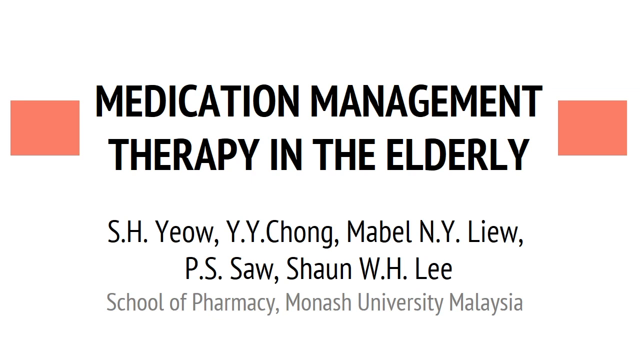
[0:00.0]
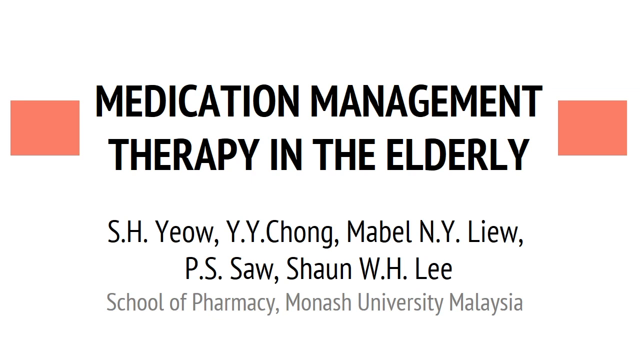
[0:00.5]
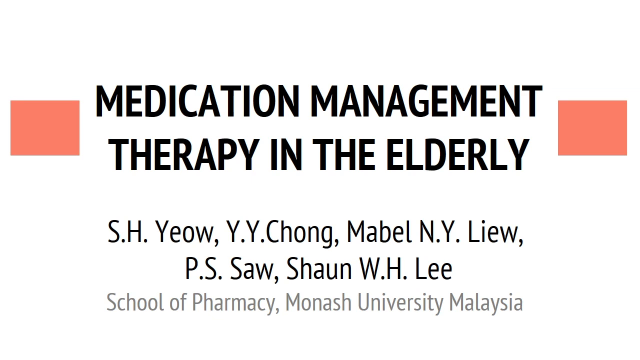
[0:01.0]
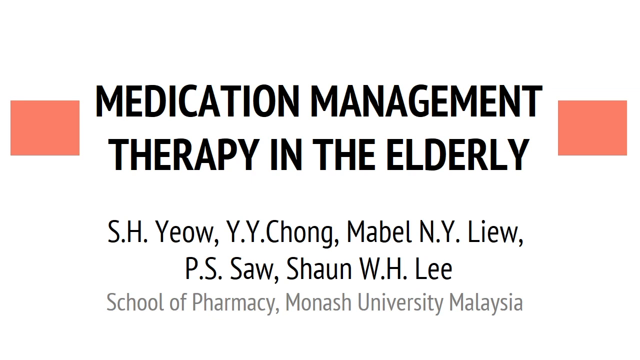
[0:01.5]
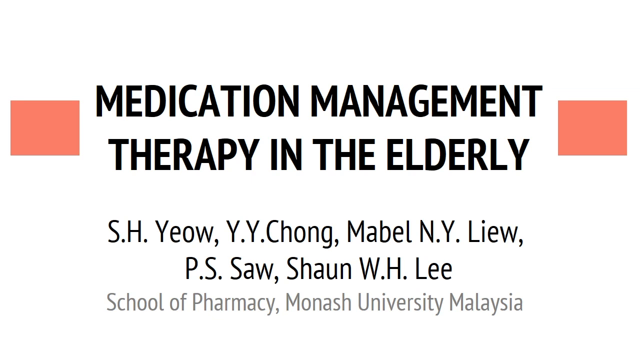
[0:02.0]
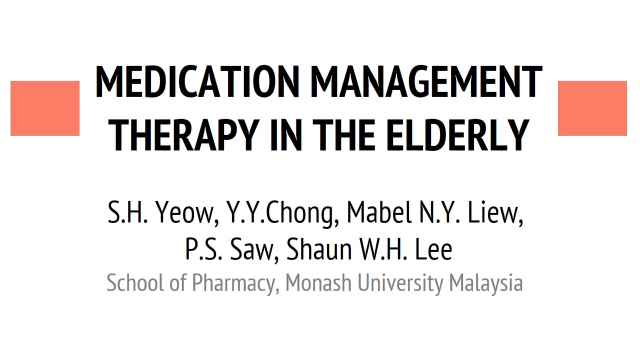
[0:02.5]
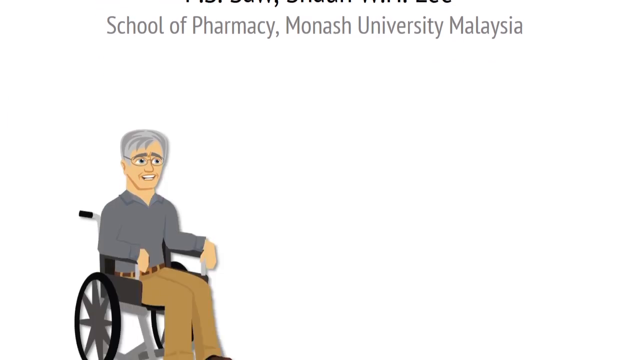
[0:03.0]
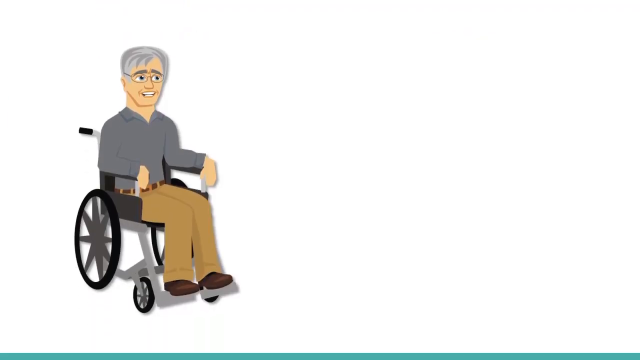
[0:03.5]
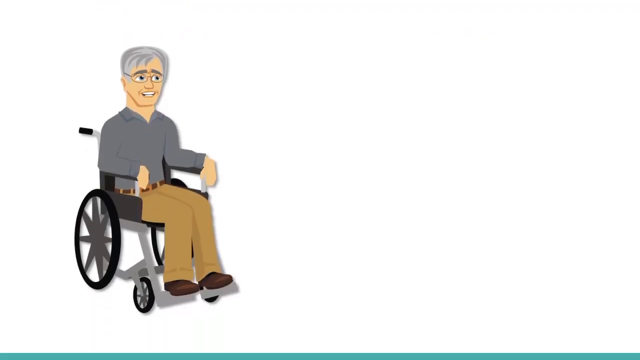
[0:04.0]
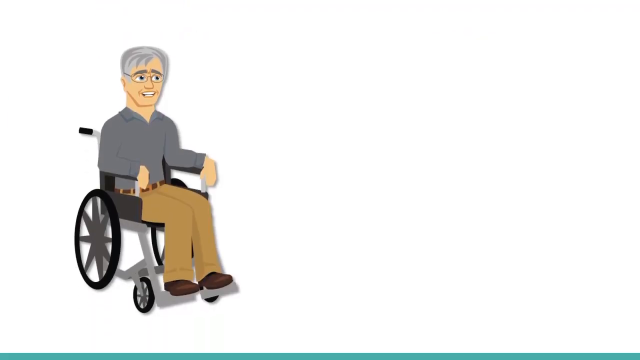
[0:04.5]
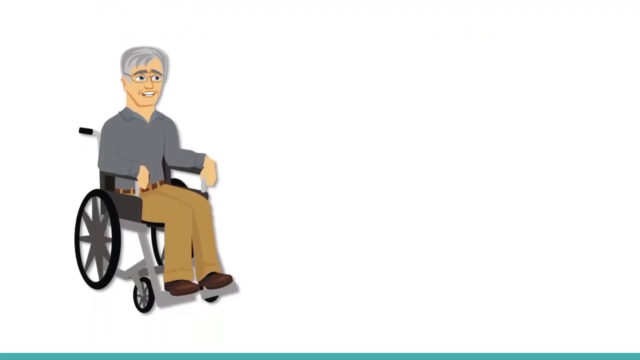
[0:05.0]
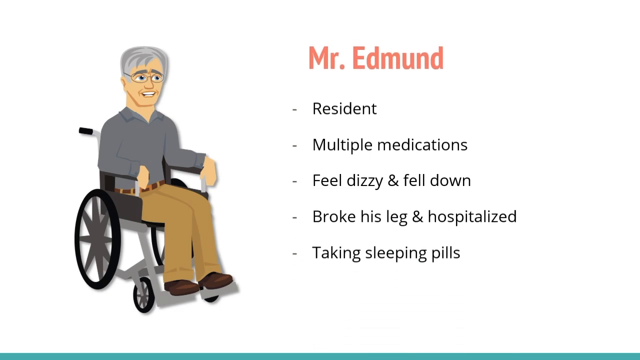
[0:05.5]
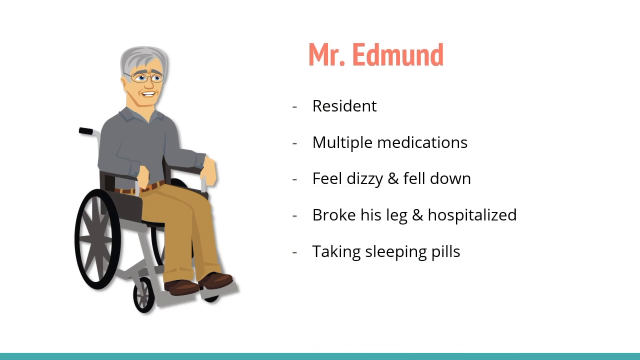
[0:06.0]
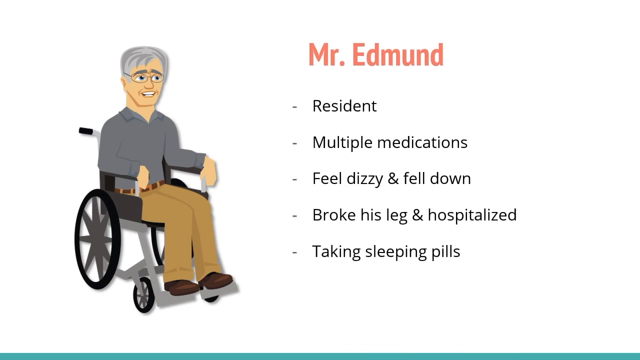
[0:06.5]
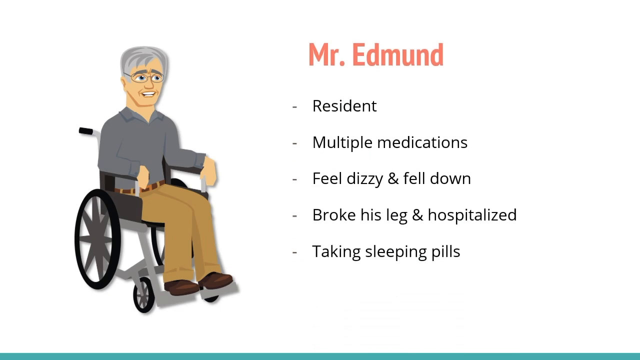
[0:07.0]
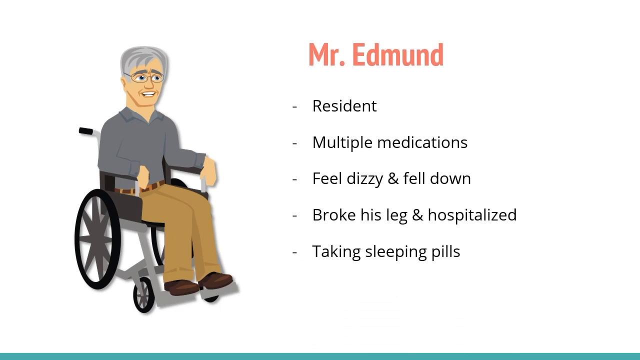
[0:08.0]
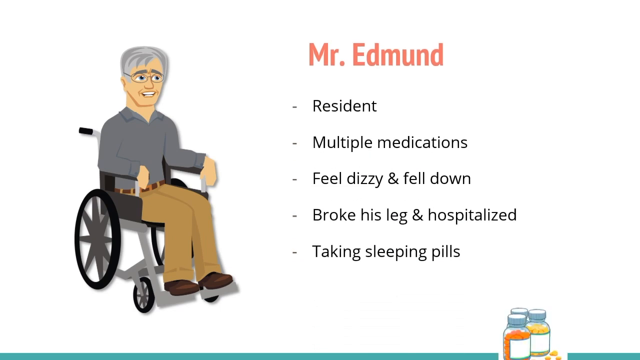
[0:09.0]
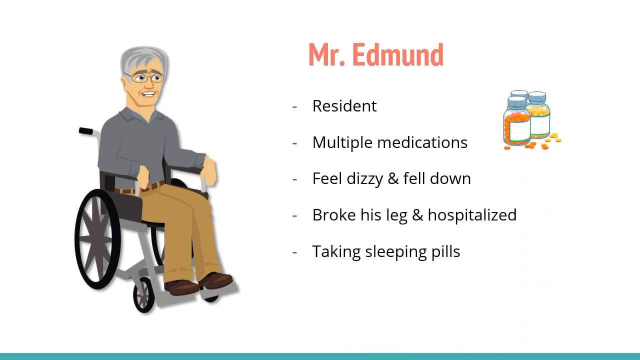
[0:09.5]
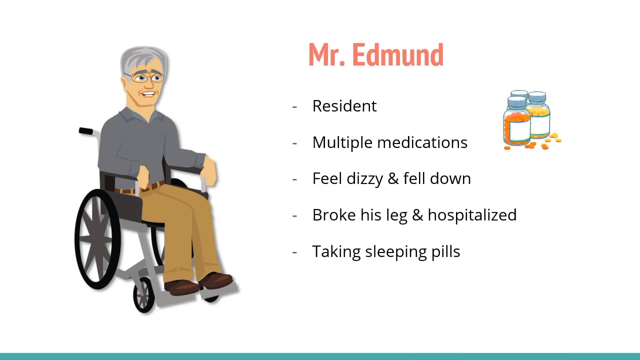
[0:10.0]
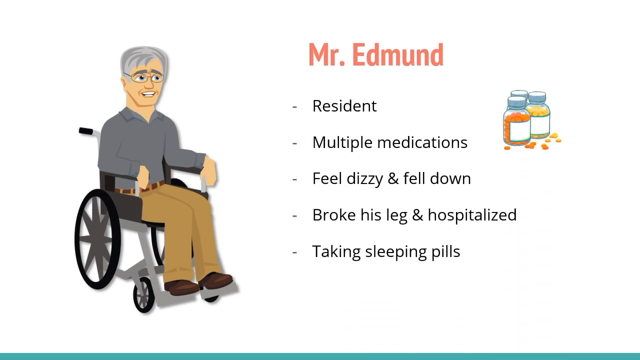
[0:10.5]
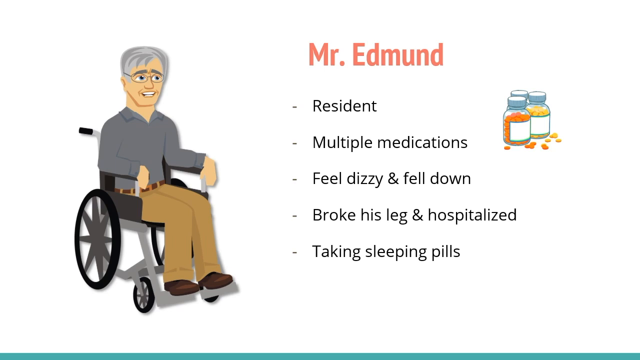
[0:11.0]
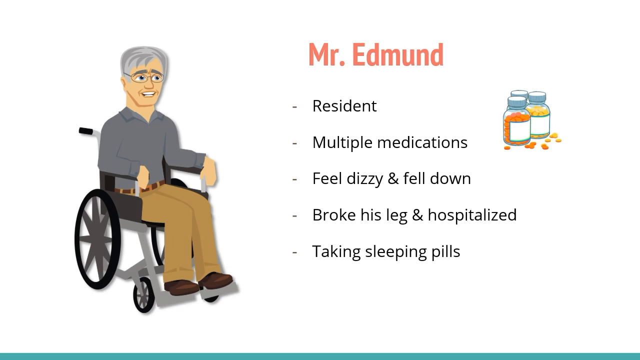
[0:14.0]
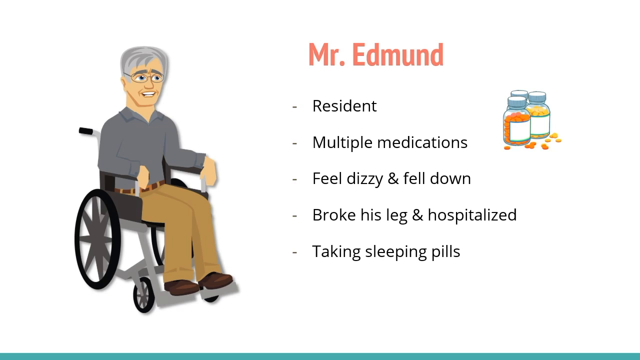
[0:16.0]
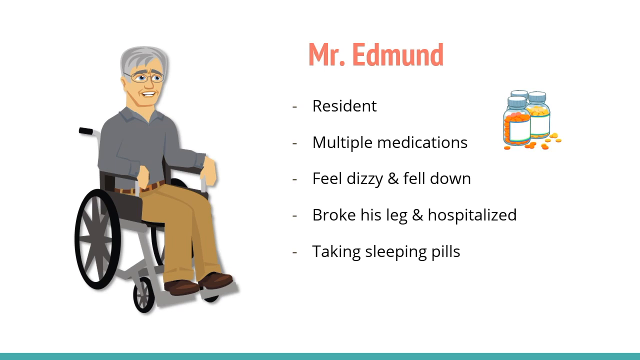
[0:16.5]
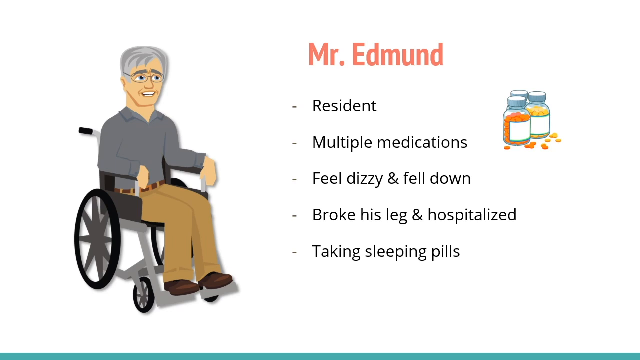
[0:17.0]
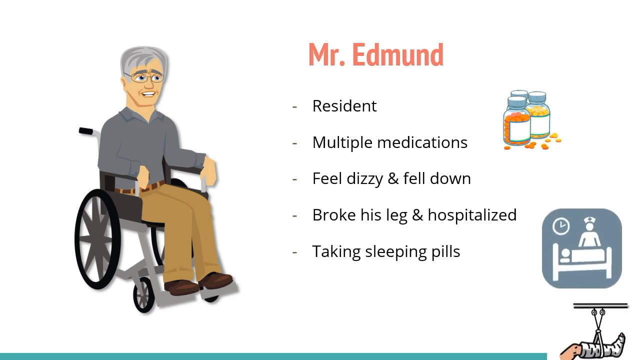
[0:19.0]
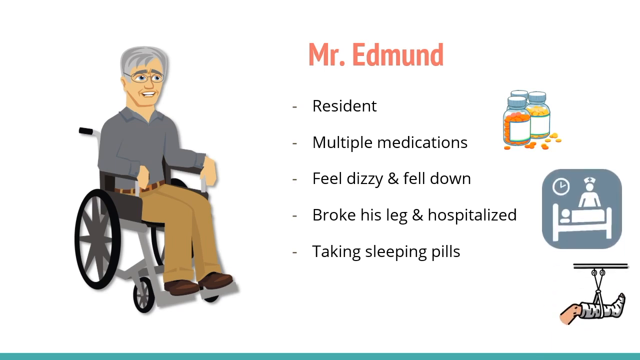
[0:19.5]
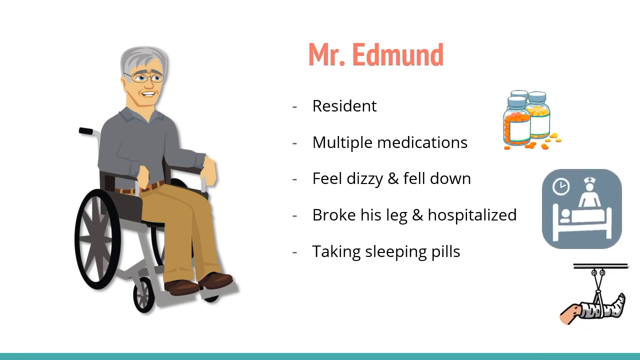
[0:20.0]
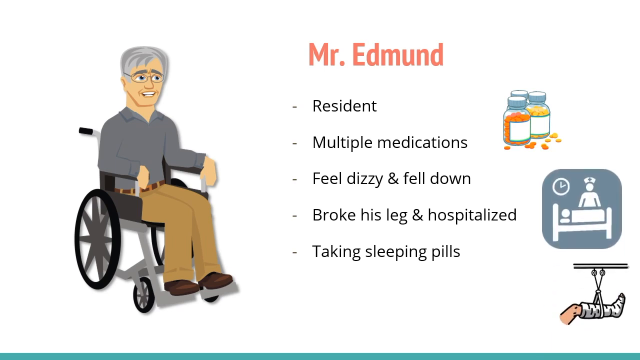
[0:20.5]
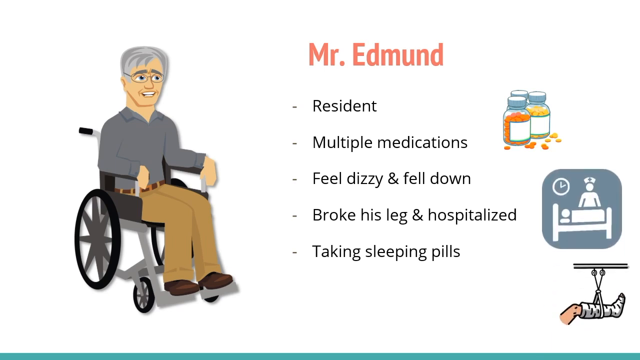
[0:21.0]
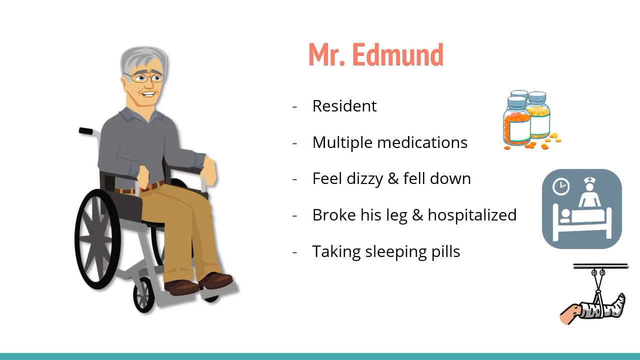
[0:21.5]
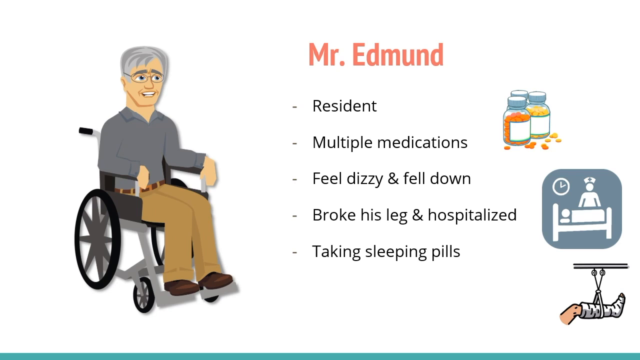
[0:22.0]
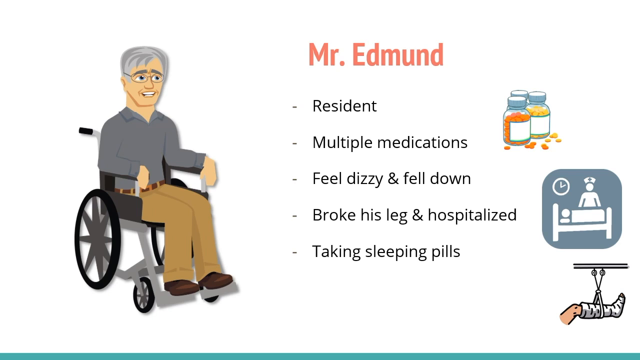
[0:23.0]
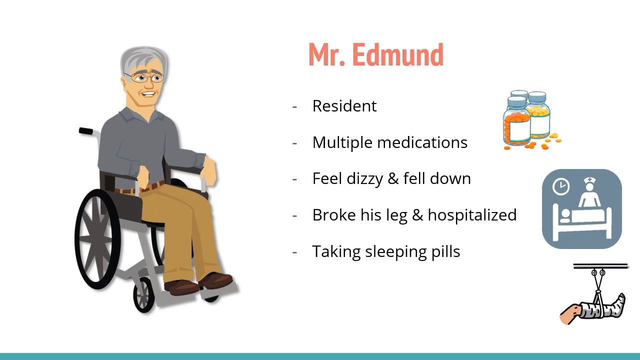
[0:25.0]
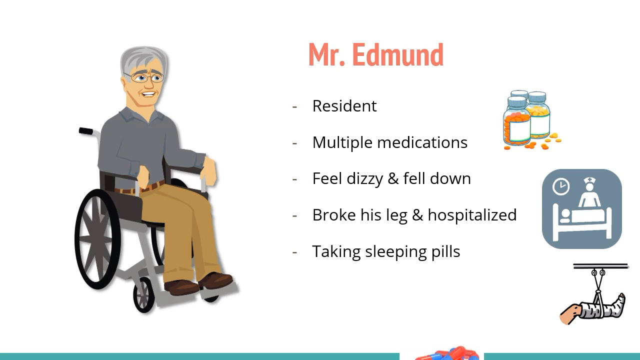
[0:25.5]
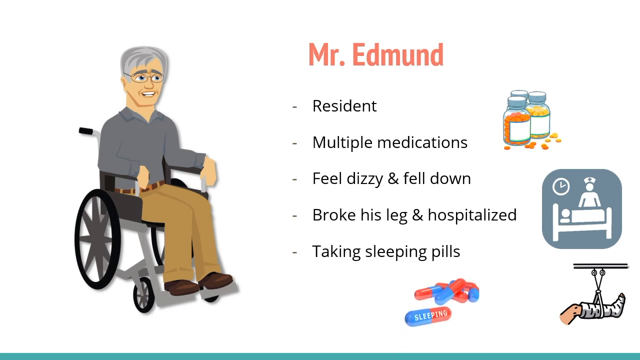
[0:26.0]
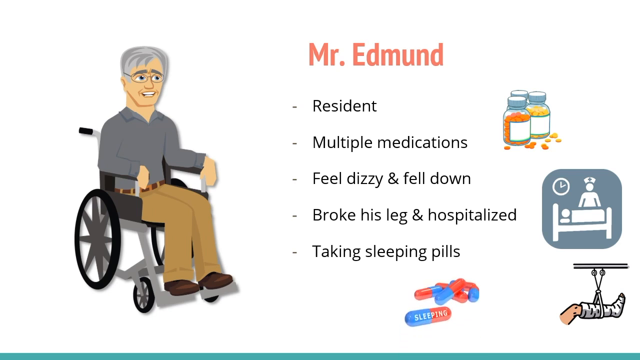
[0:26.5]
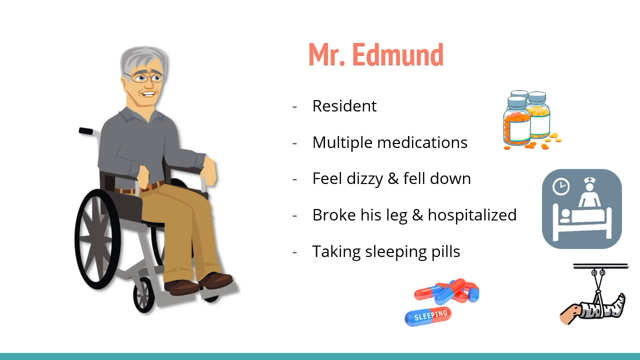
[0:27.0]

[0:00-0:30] A partially white screen fades into a black and gray gradient at the bottom, with a small red block on either side. In the middle, text reads "medication management therapy in the elderly" along with the names "S.H. Yeo, Y.Y. Chong, Mabel N.W. Liu, P.S. Cho, Sean W.H. Lee" and "School of Pharmacy at Monash University, Malaysia." Next, an elderly white-haired man in a gray shirt and brown pants sits in a wheelchair with his hands bent downwards. On the right side of the page, text reads "Mr. Edmund," and the text goes on to say that he is a resident, apparently of a nursing home, and takes multiple medications, shown by three little bottles of medicine with some pills scattered around them. The text says he felt dizzy, fell down, broke his leg and was hospitalized, illustrated by a picture of a hospital bed with a person in it, a nurse, and a clock on the wall. It also says he takes sleeping pills, which are shown at the bottom.